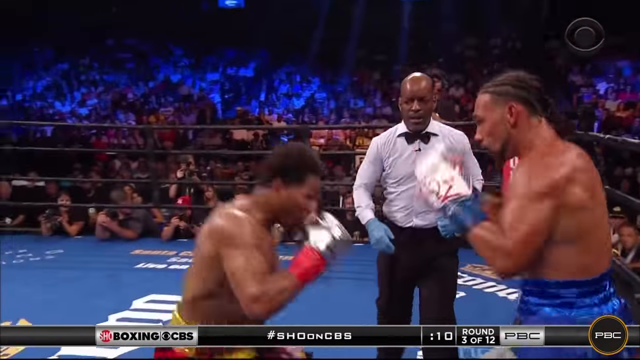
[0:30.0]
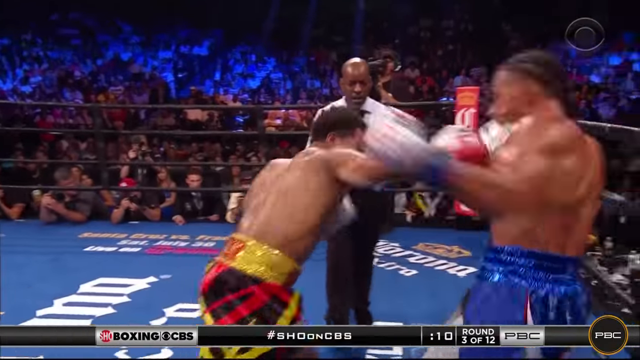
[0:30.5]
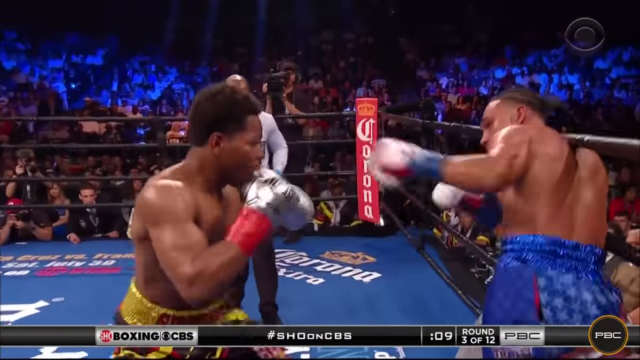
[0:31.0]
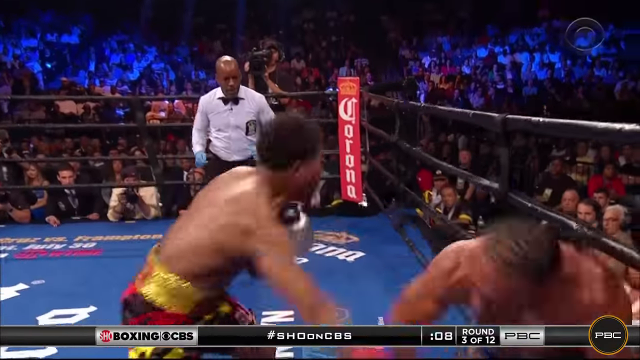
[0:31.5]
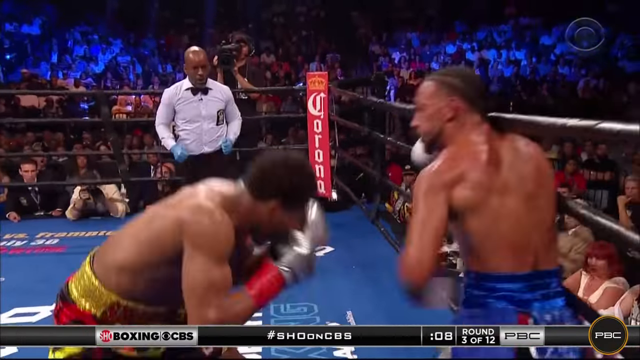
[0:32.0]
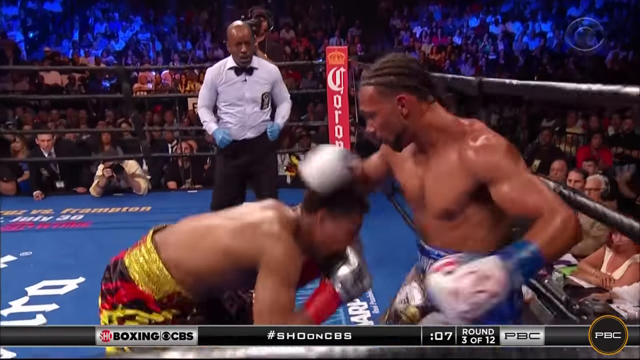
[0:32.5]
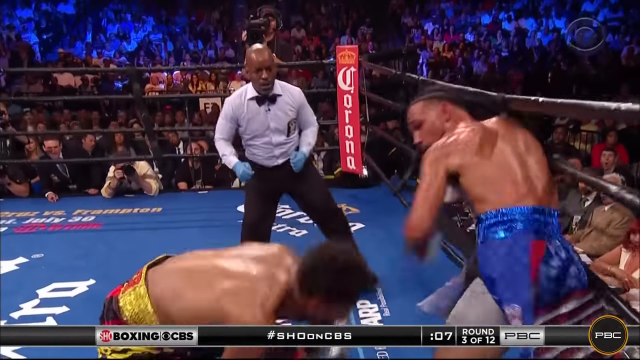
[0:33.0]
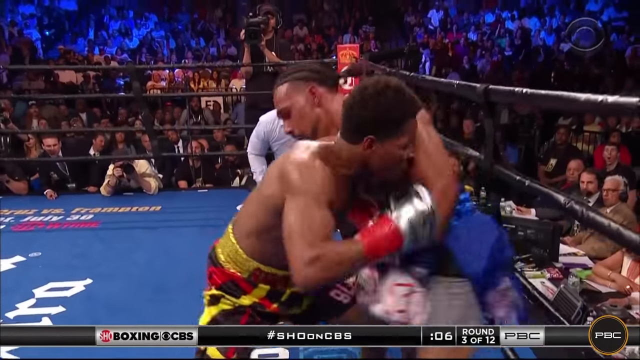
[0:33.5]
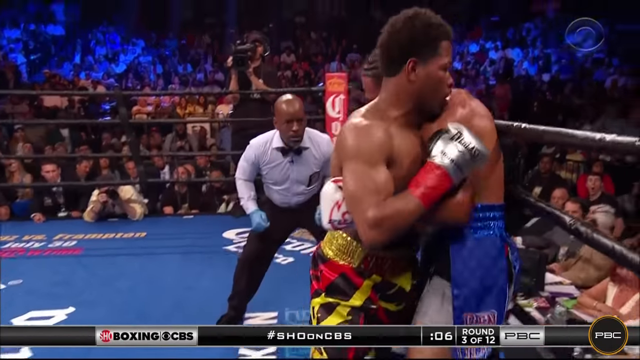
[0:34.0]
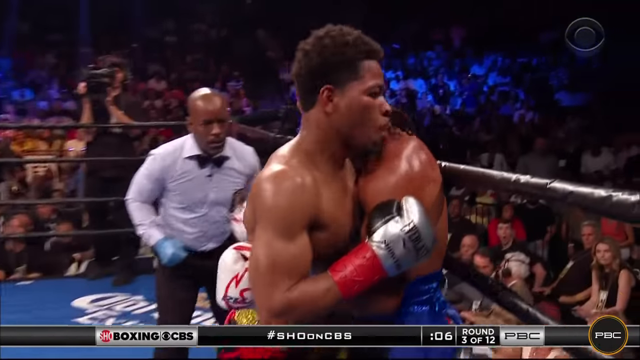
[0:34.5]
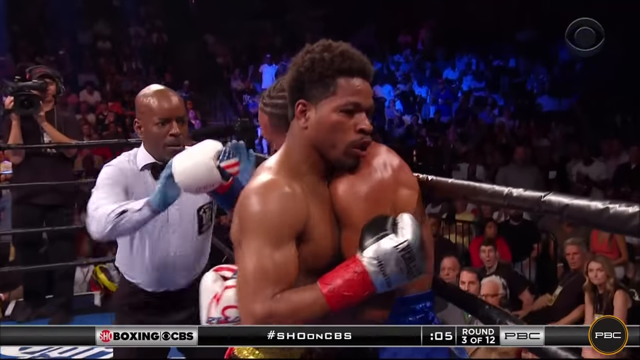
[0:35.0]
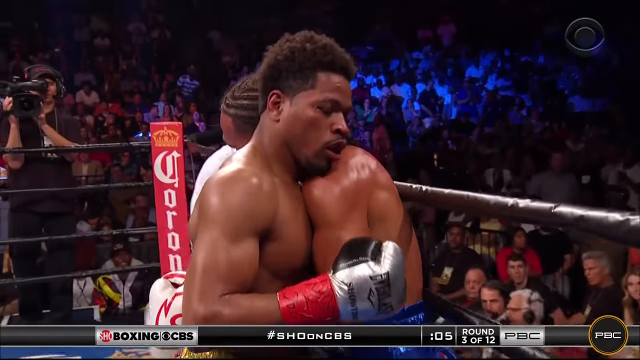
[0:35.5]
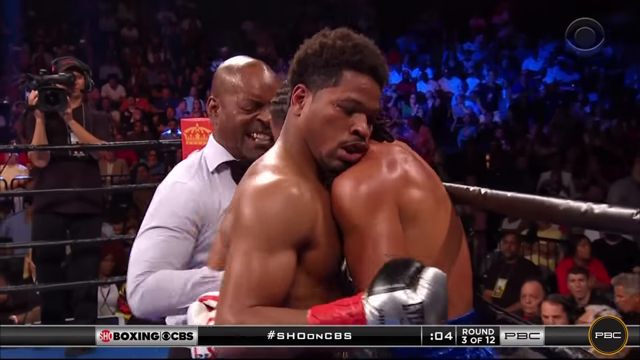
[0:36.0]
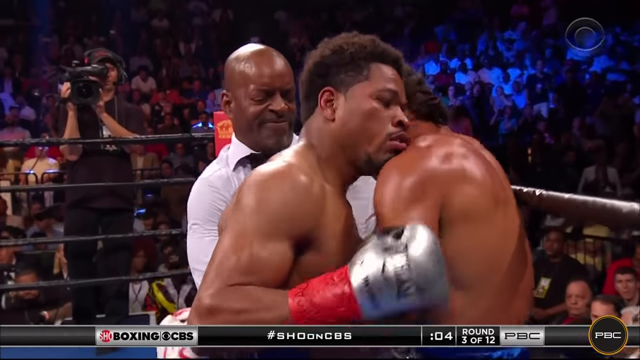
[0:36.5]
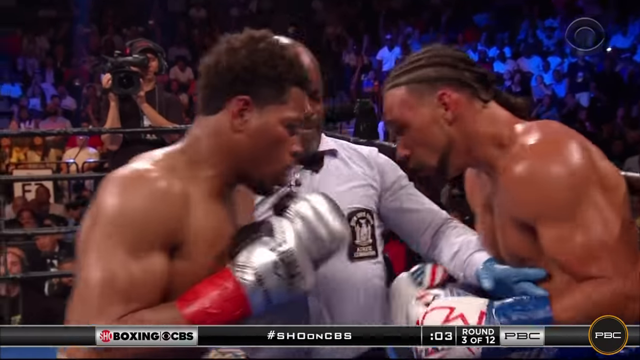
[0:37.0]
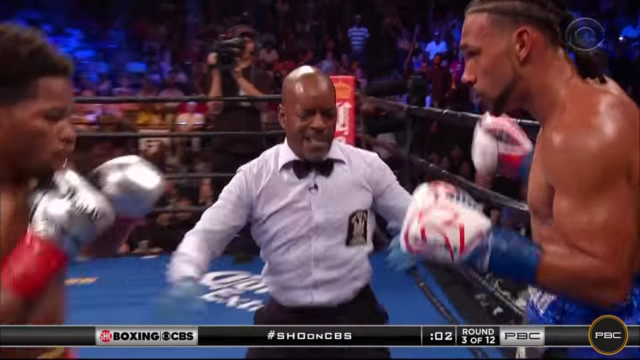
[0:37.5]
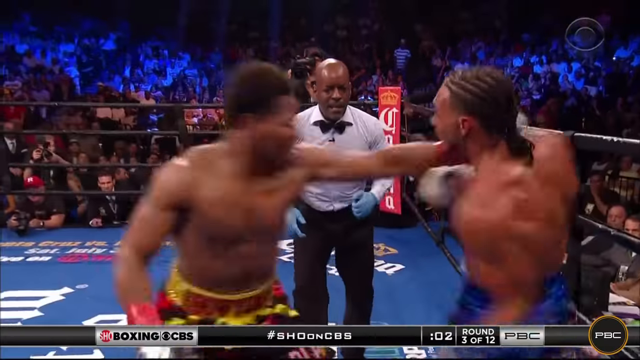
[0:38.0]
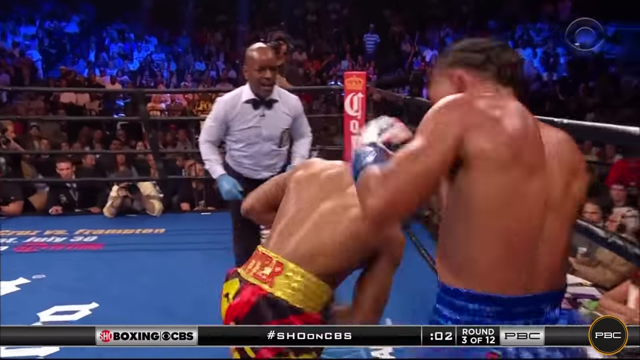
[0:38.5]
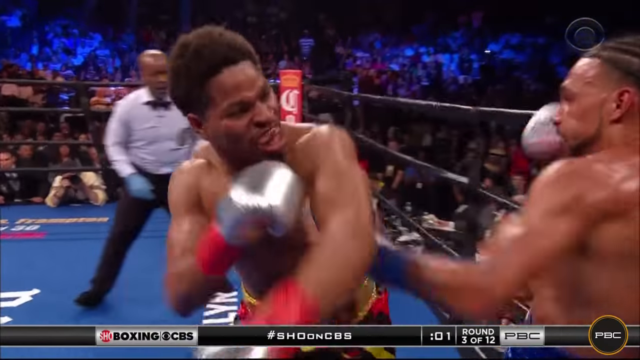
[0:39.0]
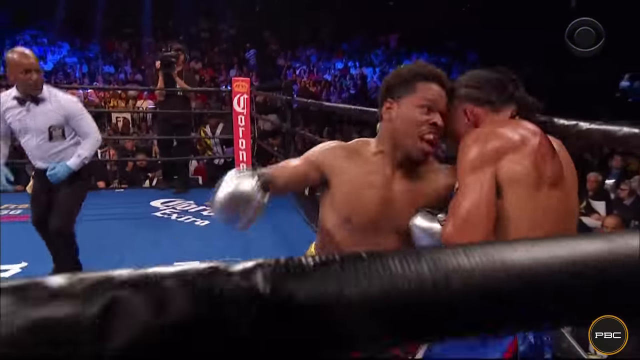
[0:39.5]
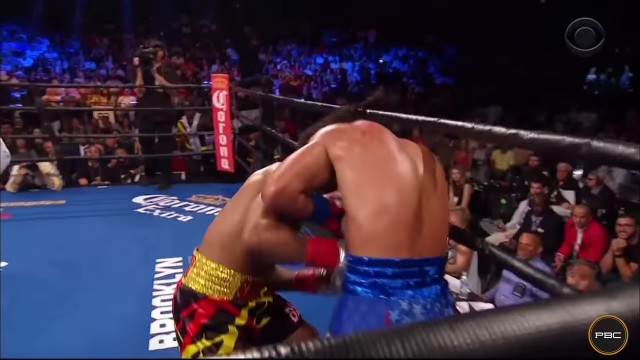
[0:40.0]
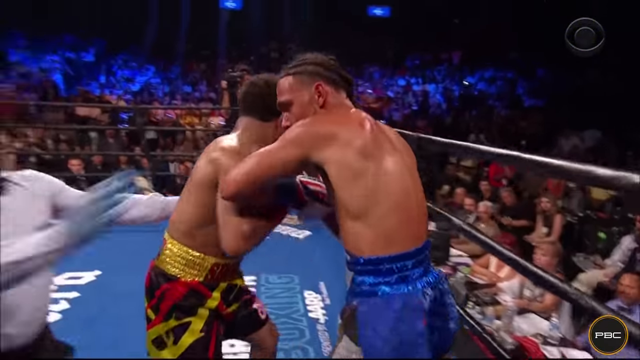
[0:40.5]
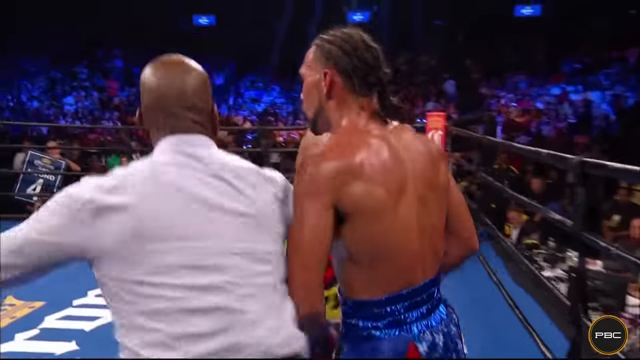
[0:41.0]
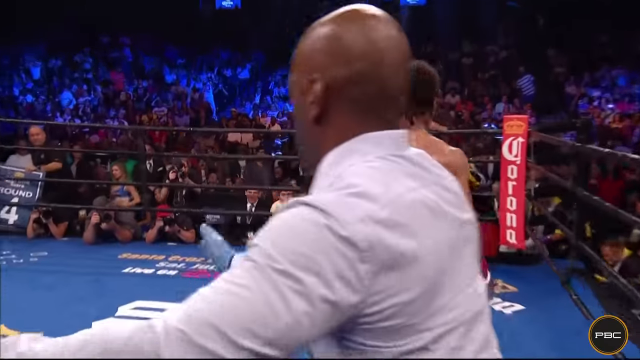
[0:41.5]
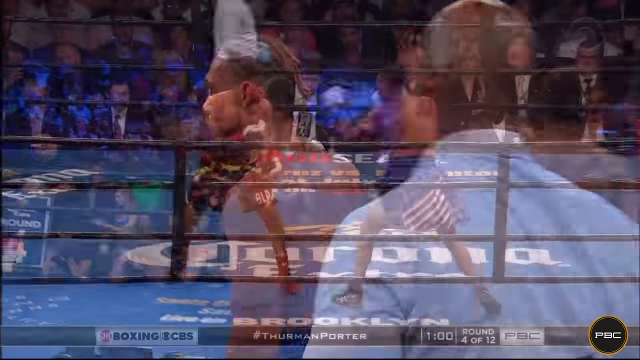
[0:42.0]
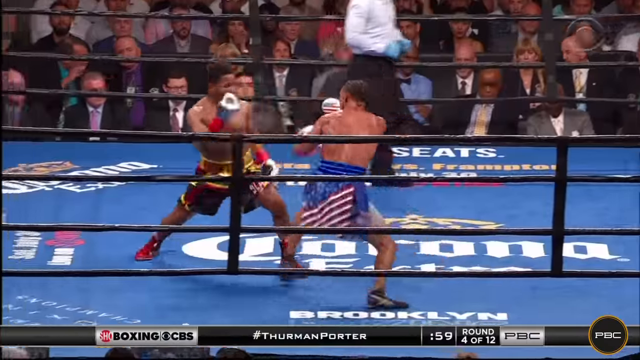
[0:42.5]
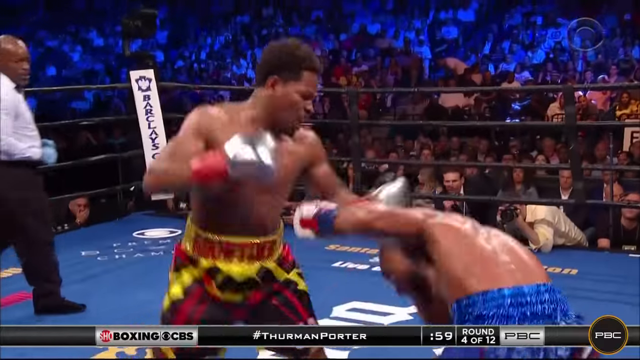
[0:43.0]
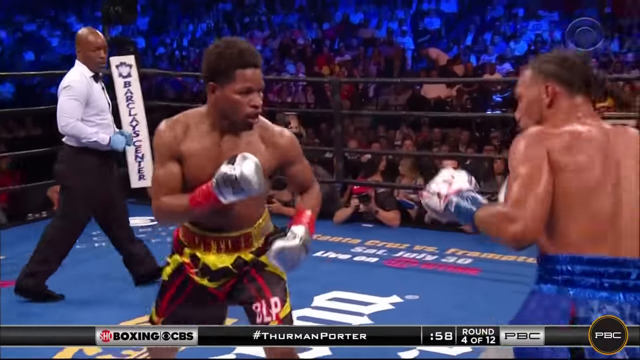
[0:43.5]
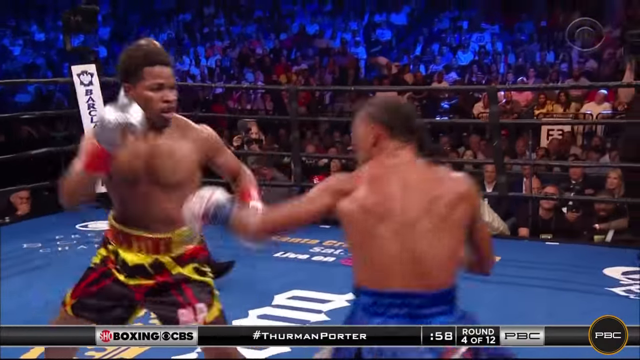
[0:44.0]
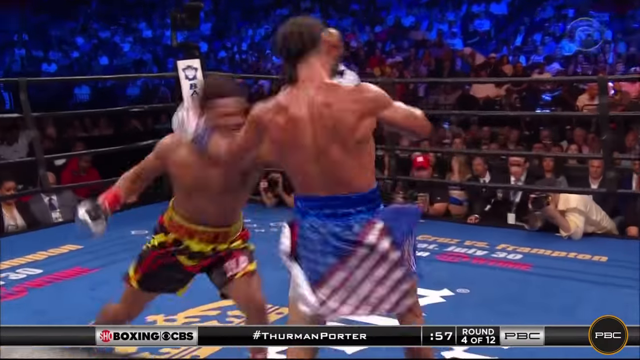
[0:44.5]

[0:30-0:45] The two boxers throw wild punches at one another. The boxer in blue shorts is up against the ropes as they exchange hard hits until they get tangled up and the referee separates them. After a jump cut they get tangled up again and the referee separates them. Another cut shows them in the middle of the ring throwing large, powerful haymakers at one another. Behind them at the edge of the ring, just outside the ropes, a man in a black outfit holds a large black camera. The referee has dark brown skin and wears a black bow tie on his long-sleeve white shirt, black pants, and black shoes. Both boxers have brown skin; the boxer in blue shorts has black braided hair on top of his head, and the boxer in yellow, black, and red shorts has short, fuzzy black hair. High in the arena where people are seated, a blue illumination or blue light is spread among the crowd in the distance. During the first section, where the boxers separate, round 3 of 12 ends and the graphic jumps to round 4 of 12.